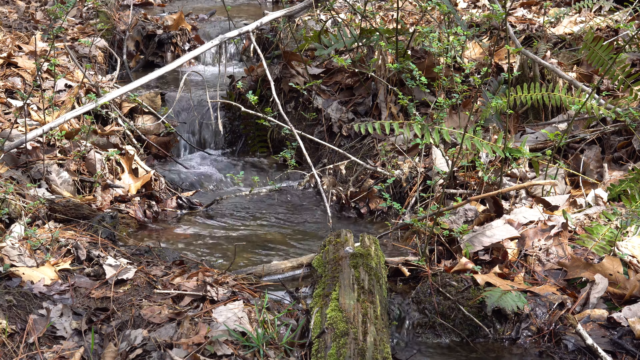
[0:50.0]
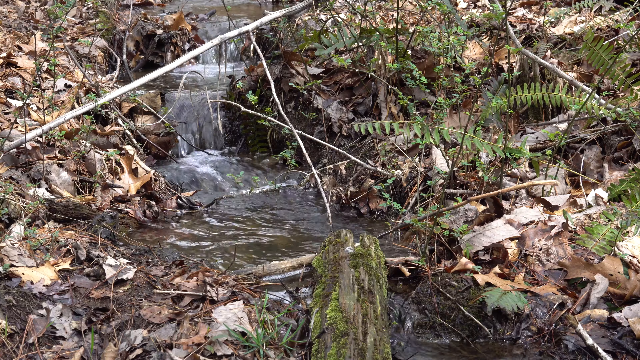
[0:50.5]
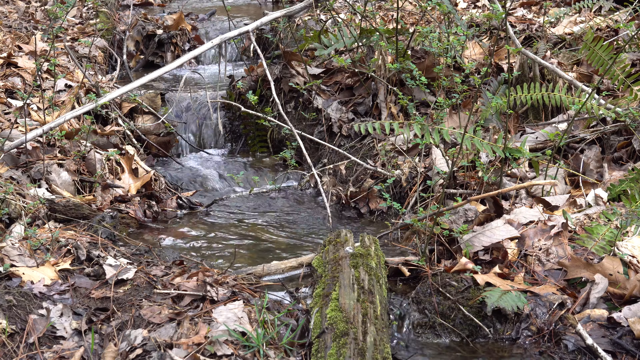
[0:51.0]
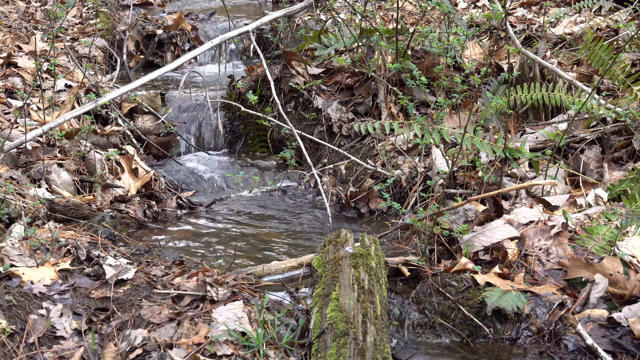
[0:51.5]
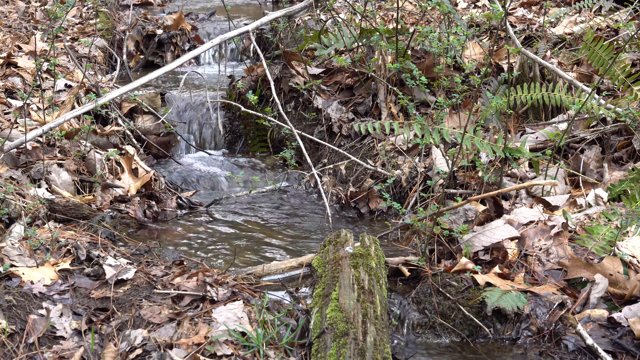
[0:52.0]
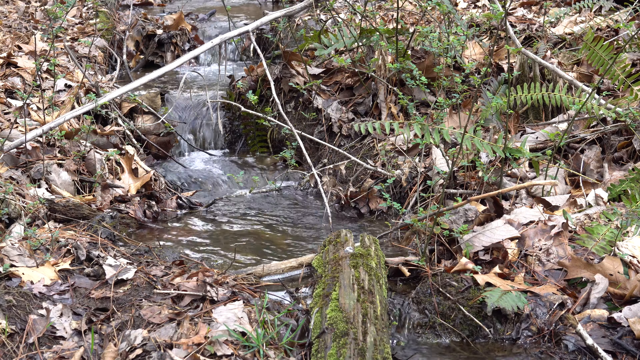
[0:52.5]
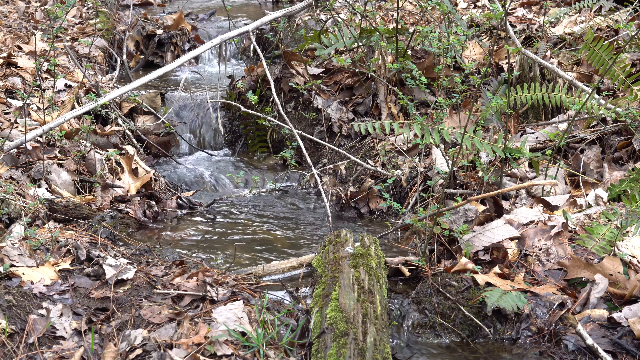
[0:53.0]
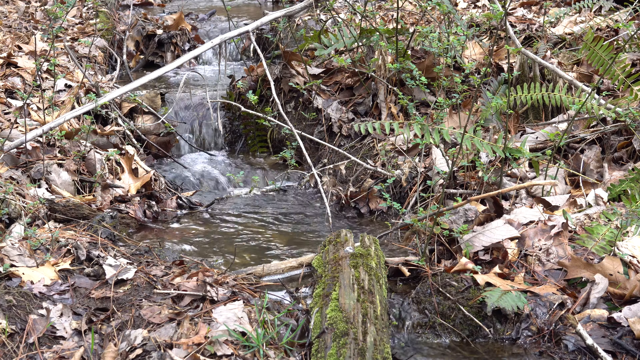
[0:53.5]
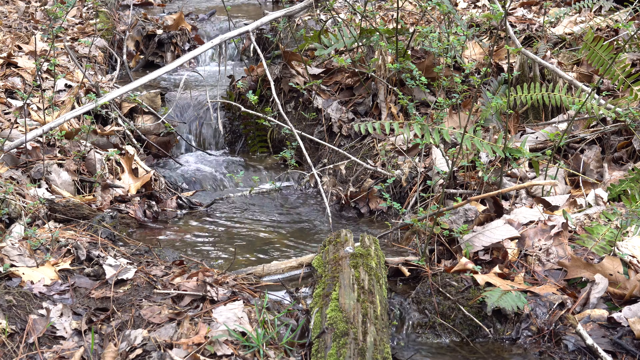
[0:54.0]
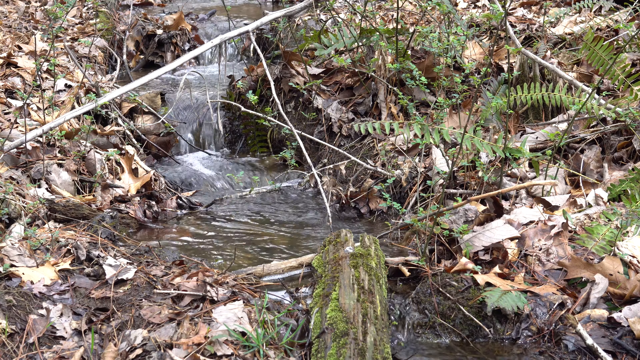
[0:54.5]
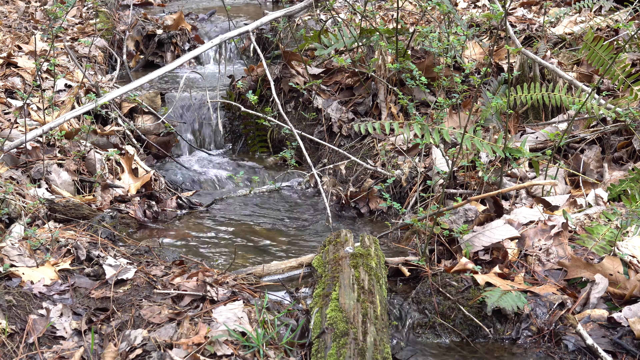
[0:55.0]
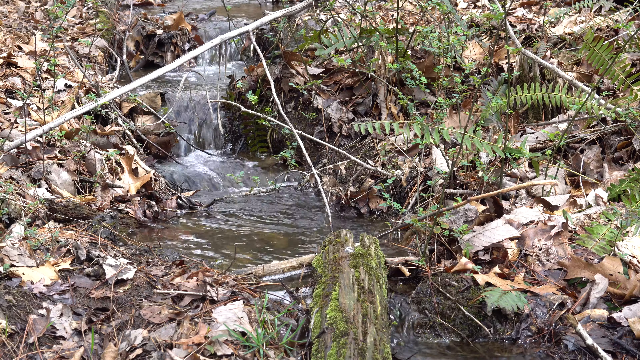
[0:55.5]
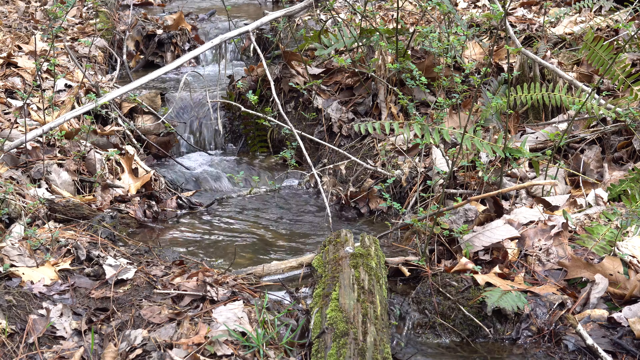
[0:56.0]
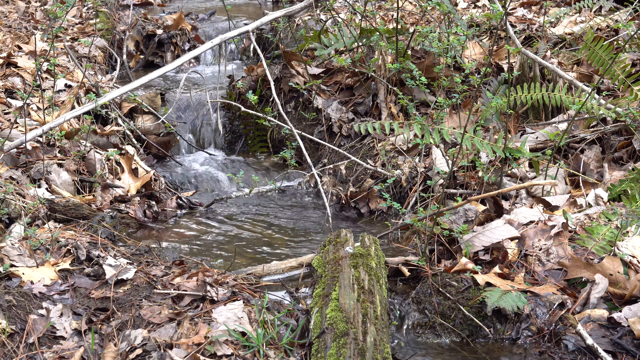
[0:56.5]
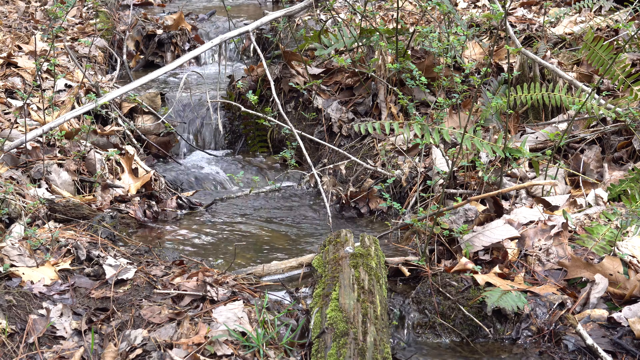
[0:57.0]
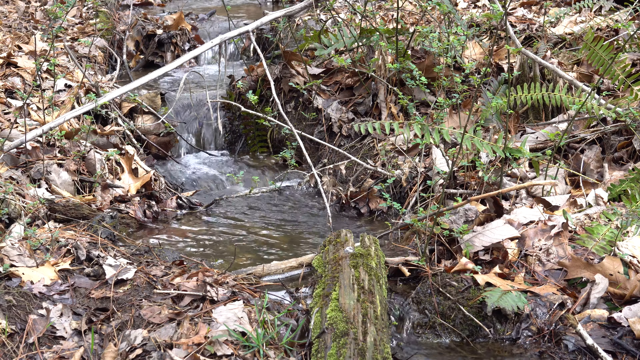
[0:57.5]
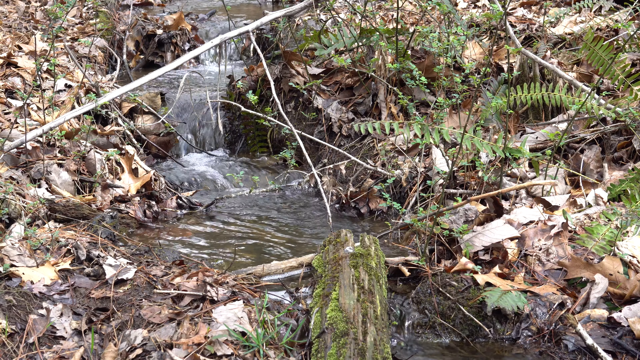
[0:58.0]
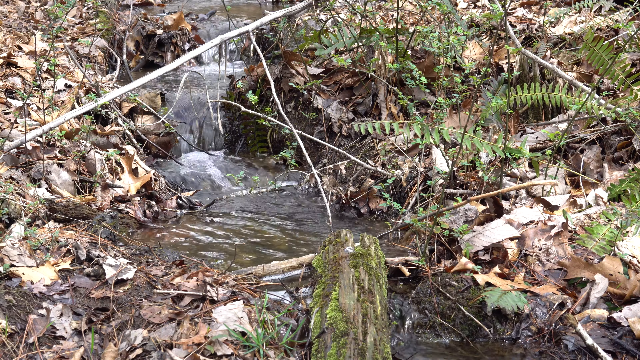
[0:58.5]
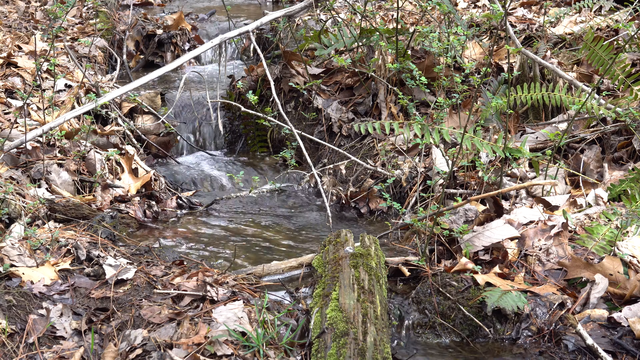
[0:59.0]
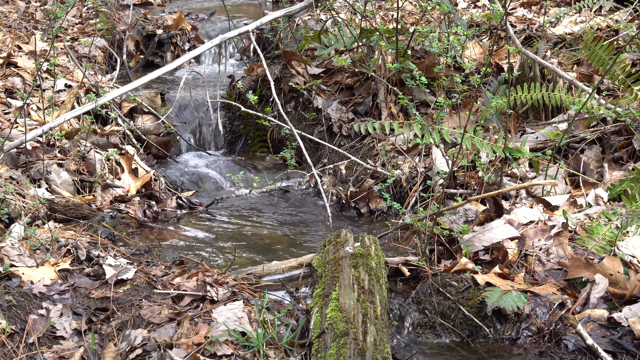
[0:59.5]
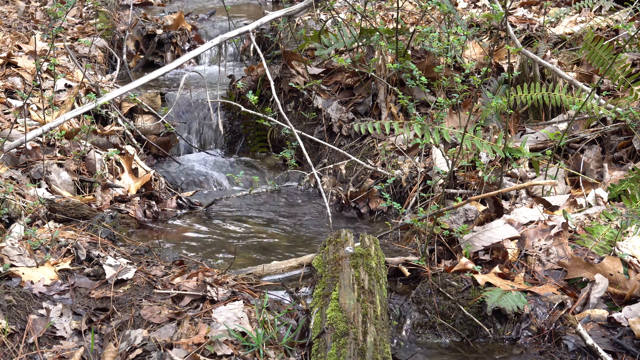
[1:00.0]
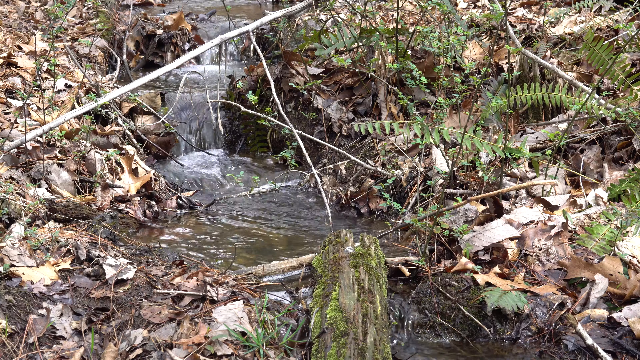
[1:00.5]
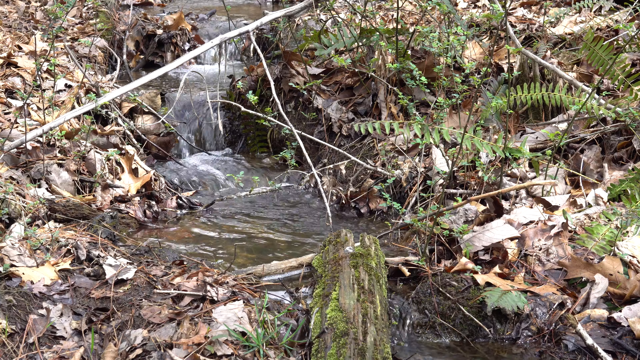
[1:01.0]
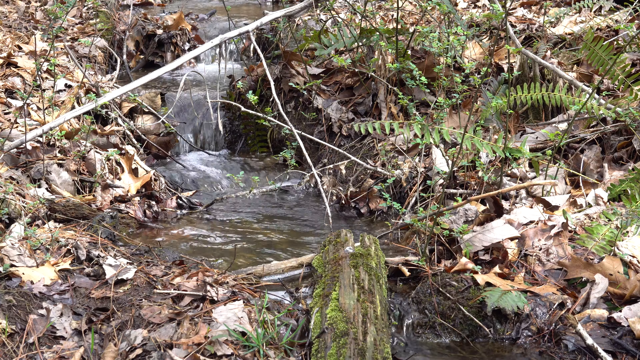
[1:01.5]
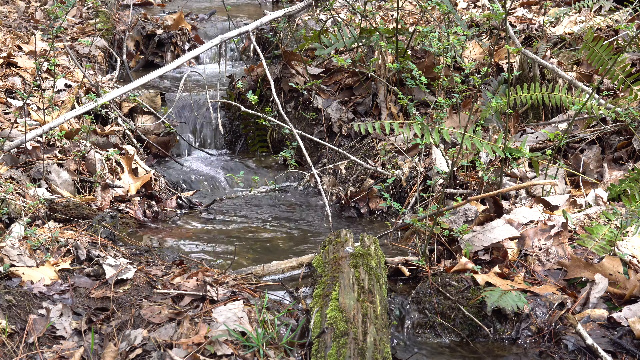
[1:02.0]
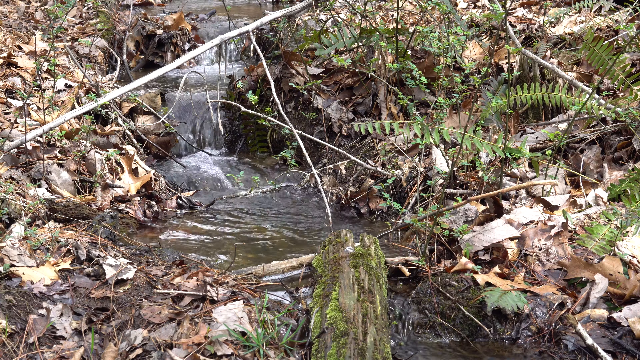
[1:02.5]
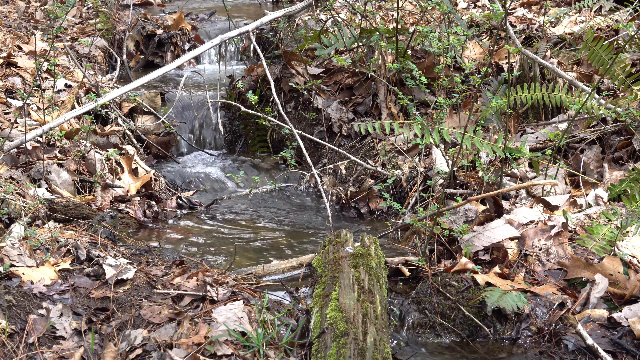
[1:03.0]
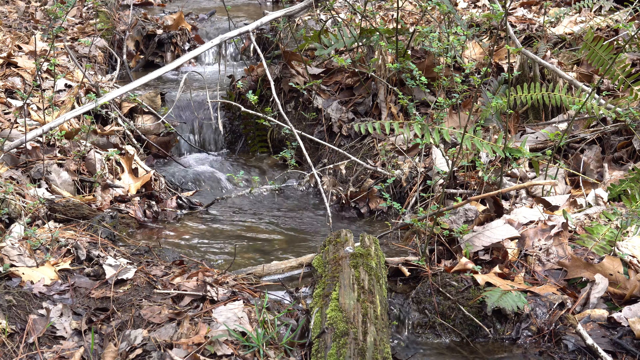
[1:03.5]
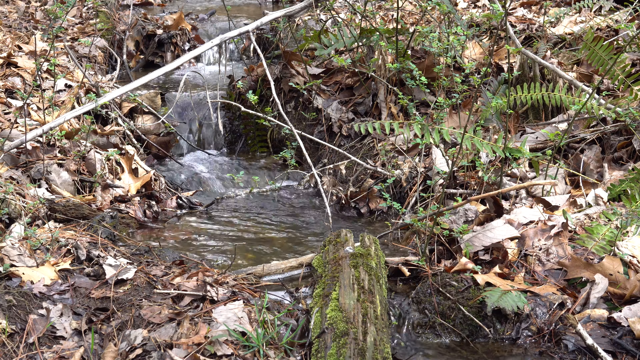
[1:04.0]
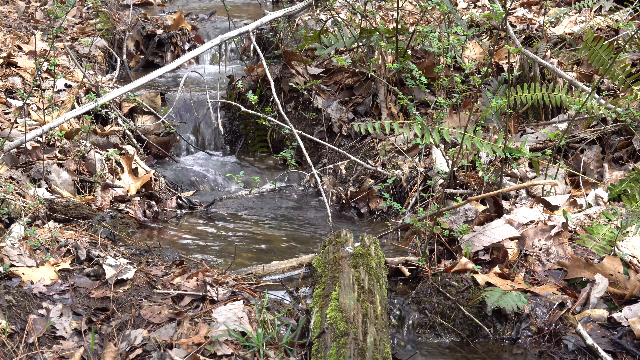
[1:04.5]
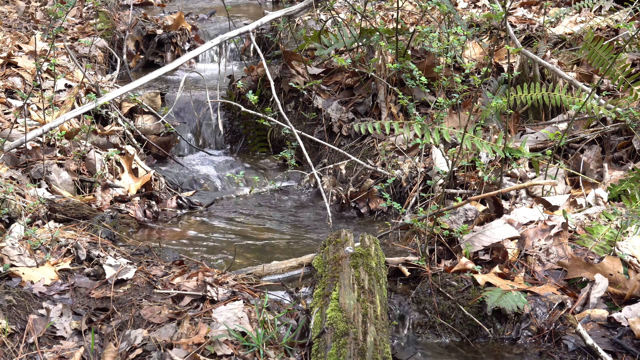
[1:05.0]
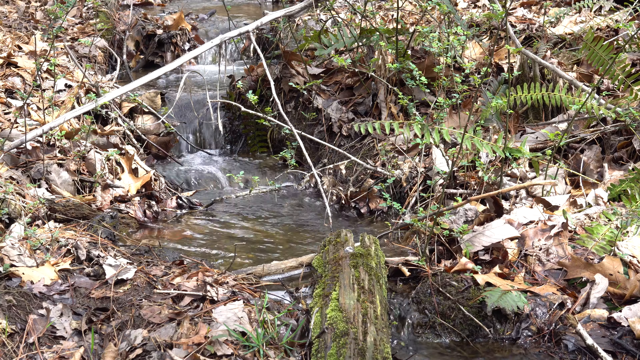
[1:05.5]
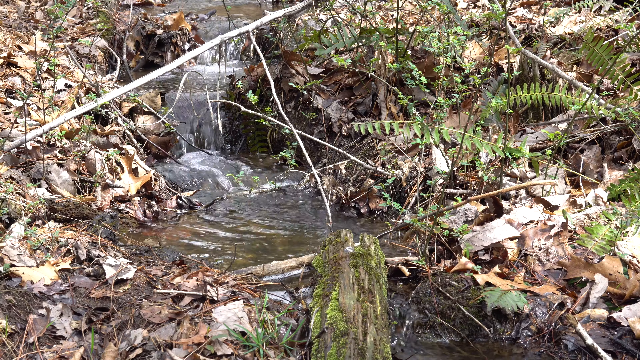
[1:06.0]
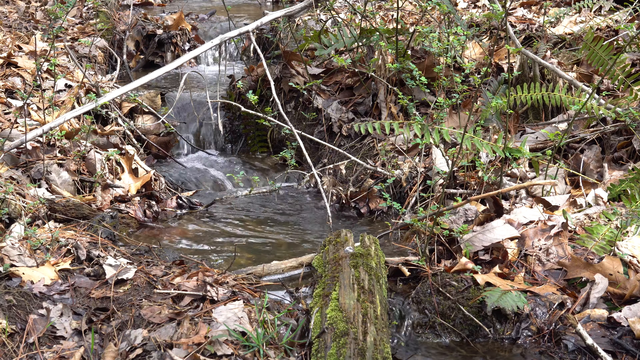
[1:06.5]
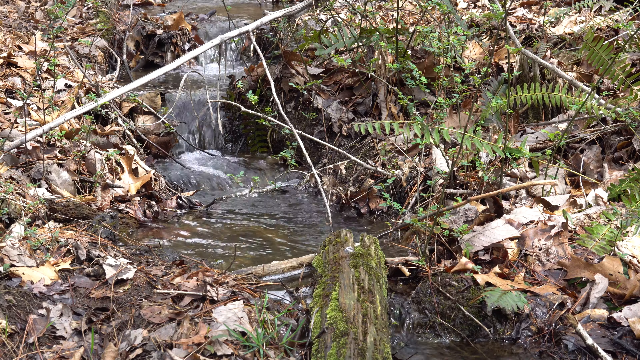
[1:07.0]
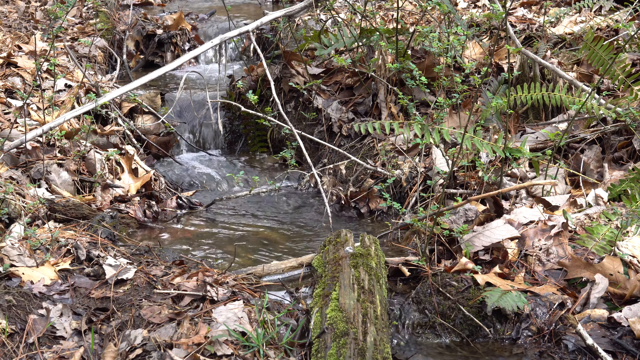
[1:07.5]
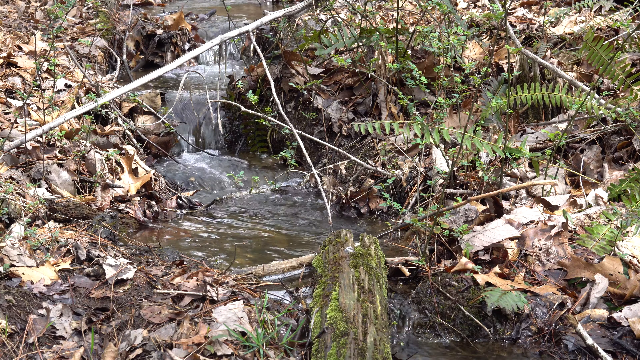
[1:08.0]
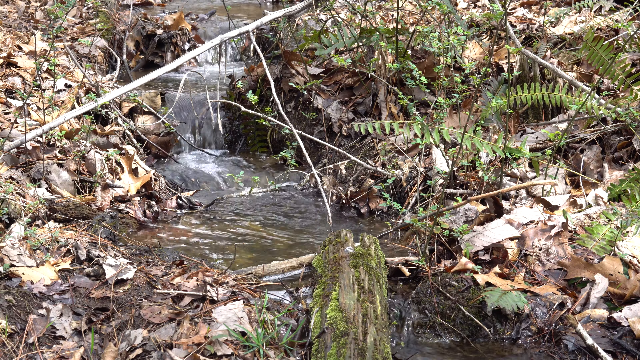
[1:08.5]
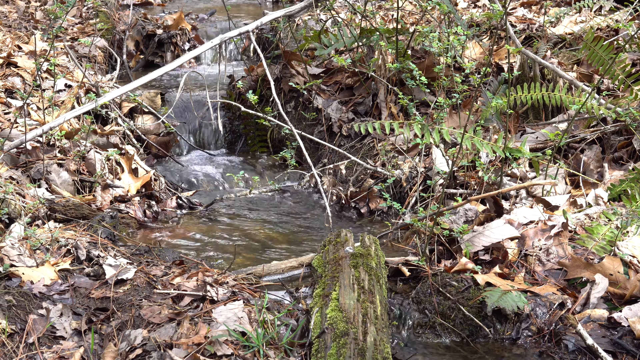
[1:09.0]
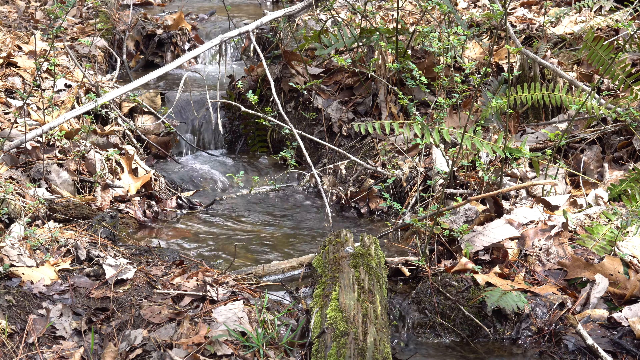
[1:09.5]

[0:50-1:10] The scene is much the same. In the upper part of the screen, on the left side but almost toward the middle of the top, is the first small drop. None of the drops are large, and there is always a white splash at the bottom. There are a lot of brown leaves on the ground. Few leaves are visible above, and it is unclear whether they belong to a plant or to trees; there is especially little foliage on the left side.